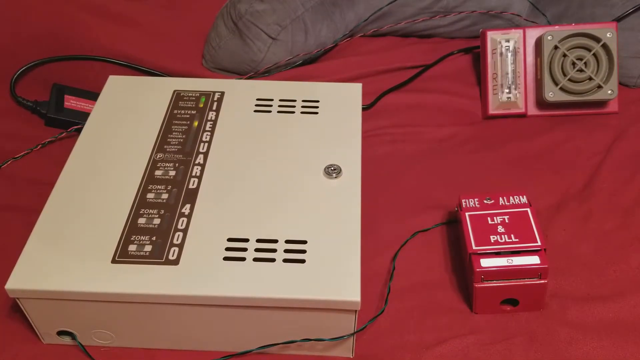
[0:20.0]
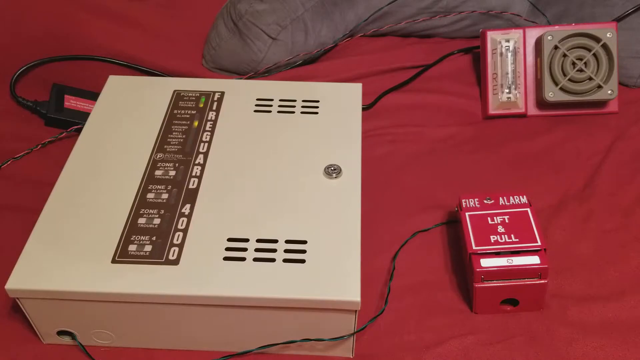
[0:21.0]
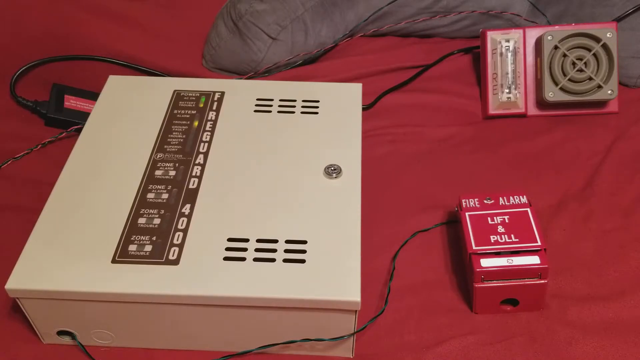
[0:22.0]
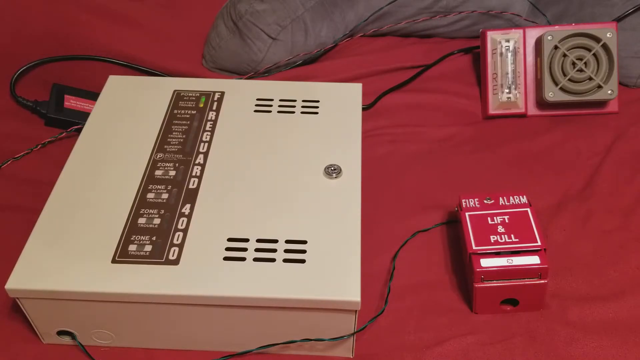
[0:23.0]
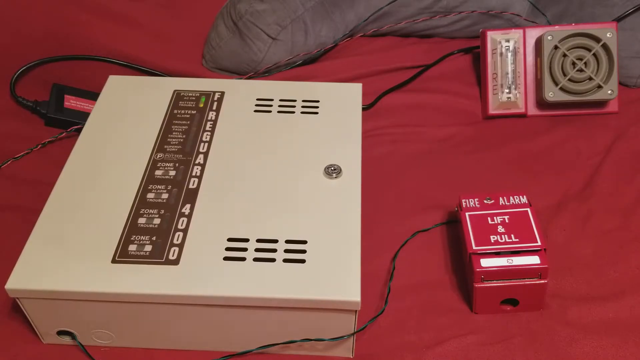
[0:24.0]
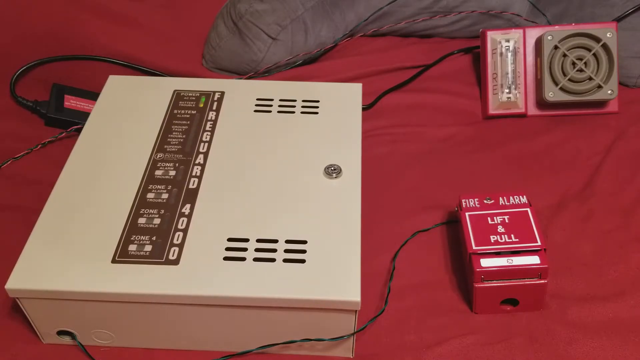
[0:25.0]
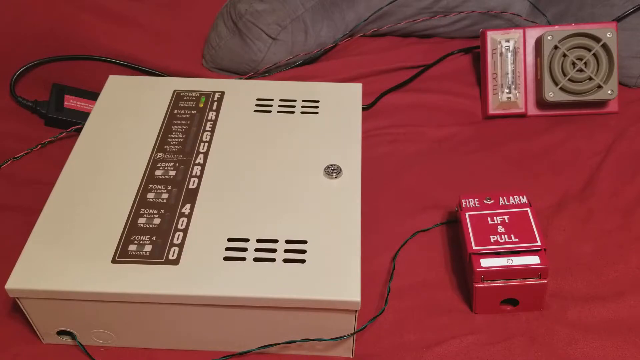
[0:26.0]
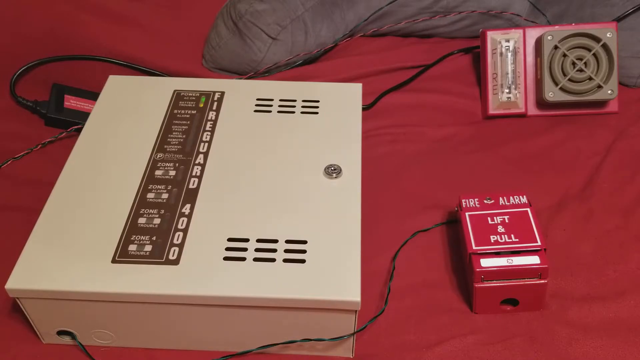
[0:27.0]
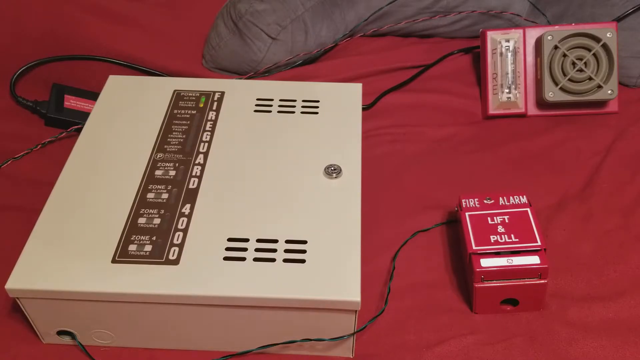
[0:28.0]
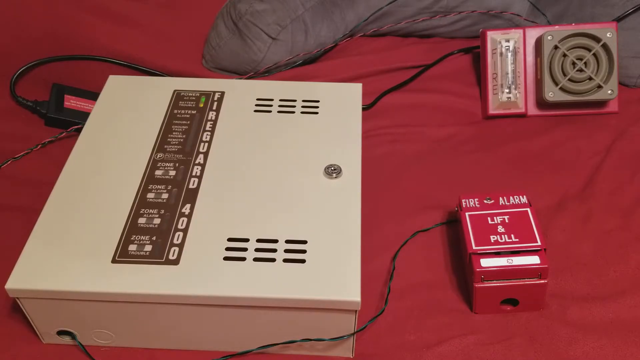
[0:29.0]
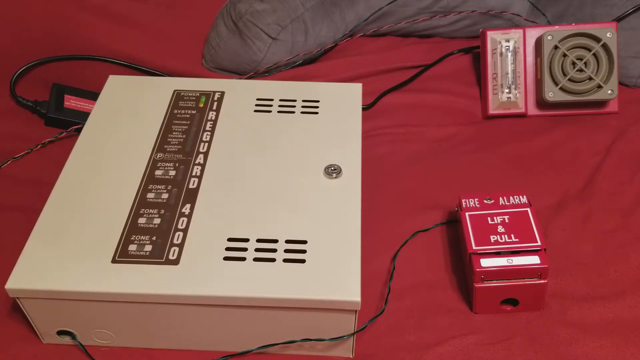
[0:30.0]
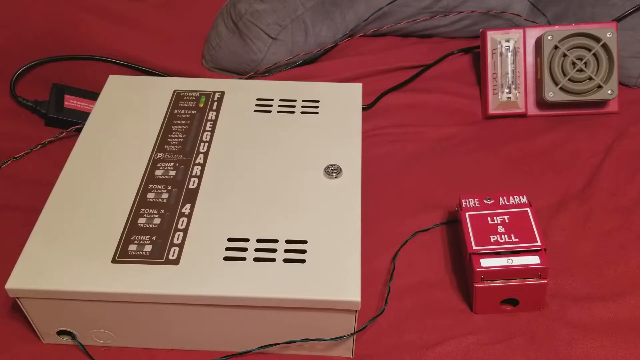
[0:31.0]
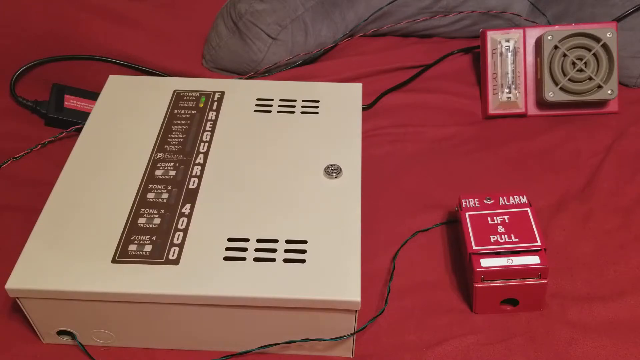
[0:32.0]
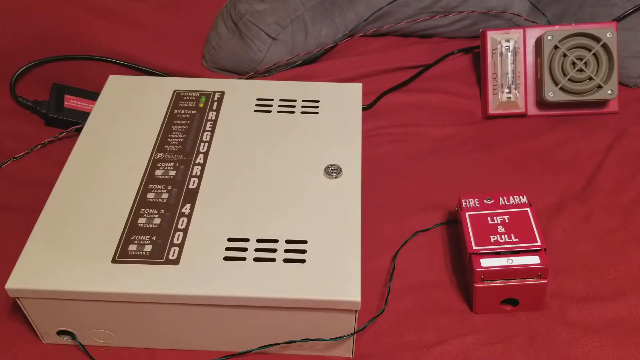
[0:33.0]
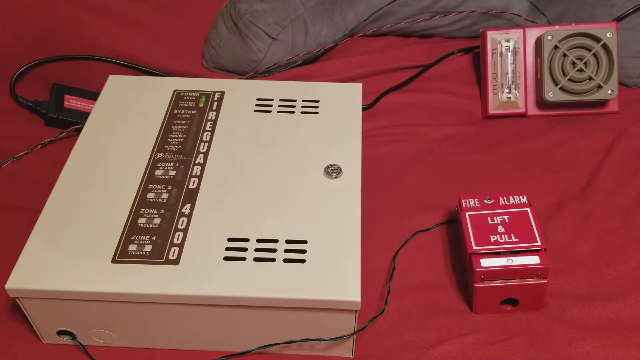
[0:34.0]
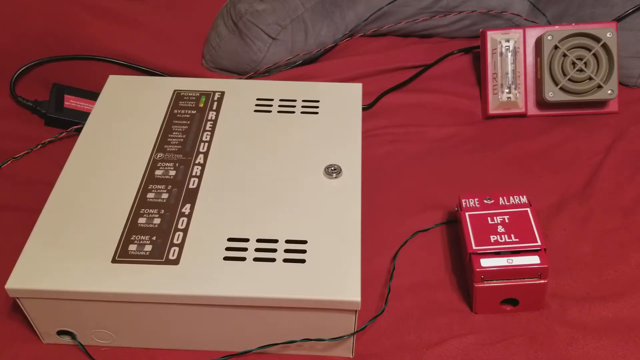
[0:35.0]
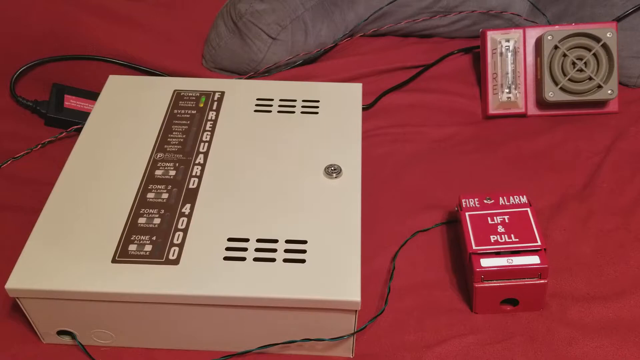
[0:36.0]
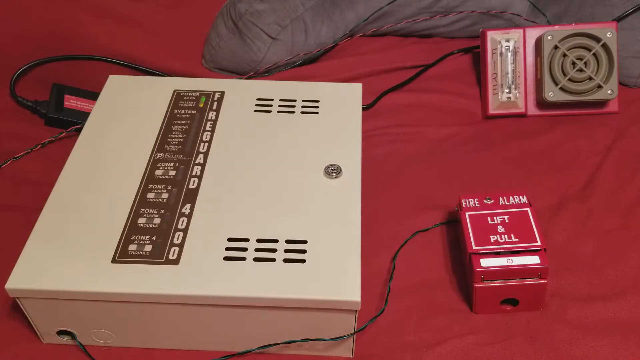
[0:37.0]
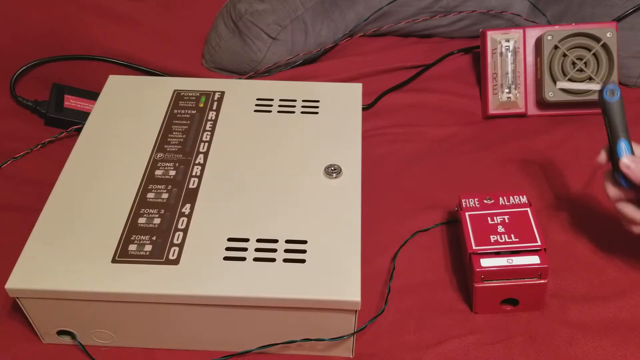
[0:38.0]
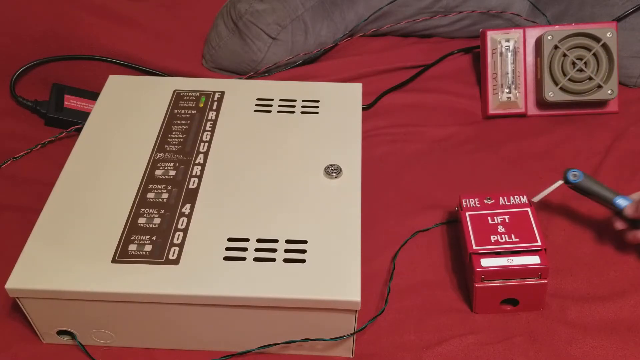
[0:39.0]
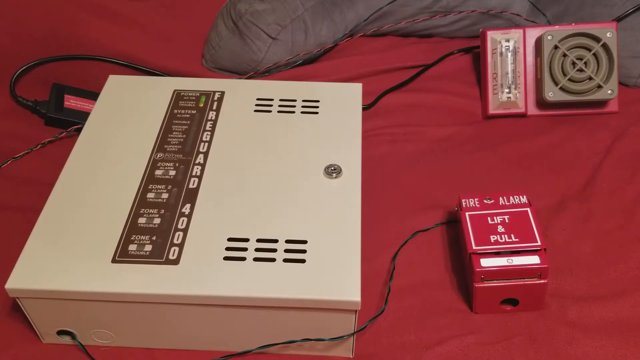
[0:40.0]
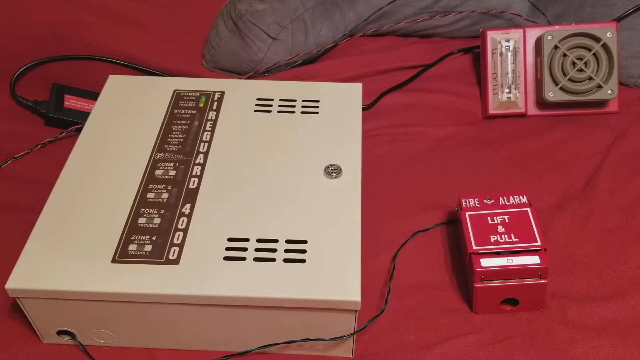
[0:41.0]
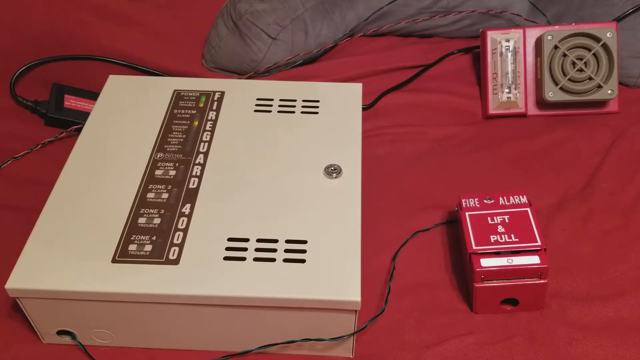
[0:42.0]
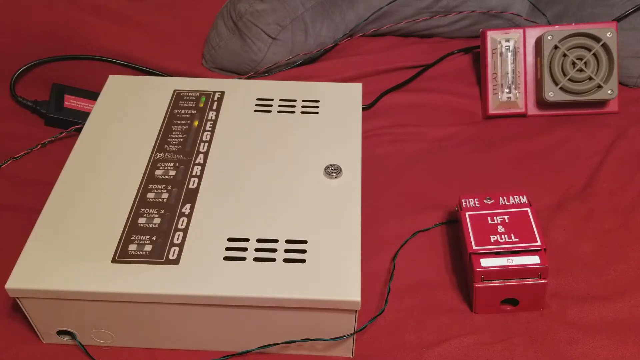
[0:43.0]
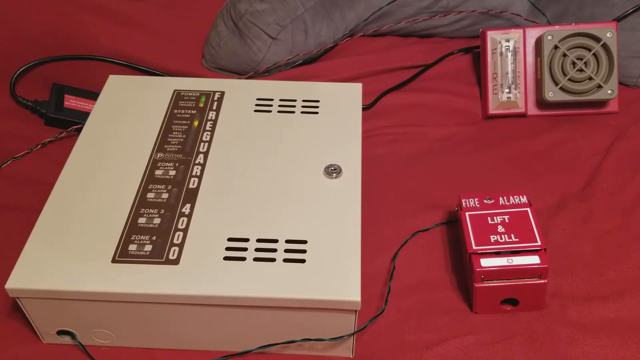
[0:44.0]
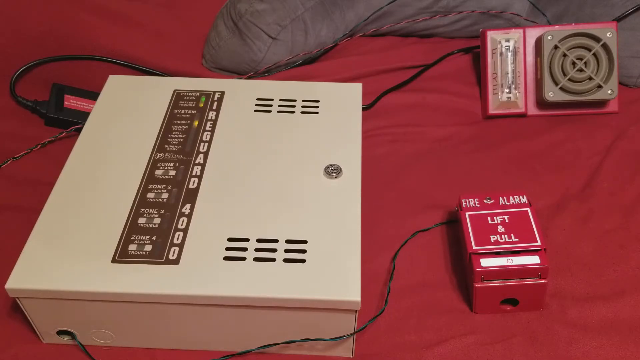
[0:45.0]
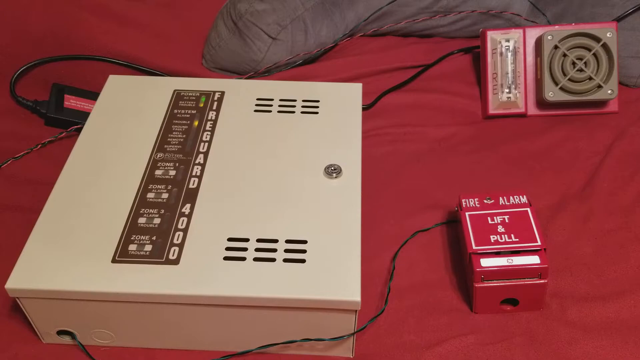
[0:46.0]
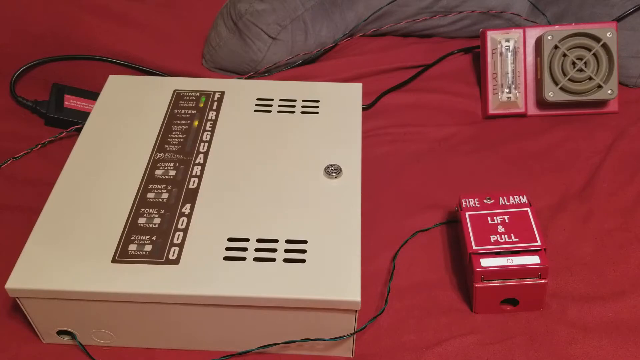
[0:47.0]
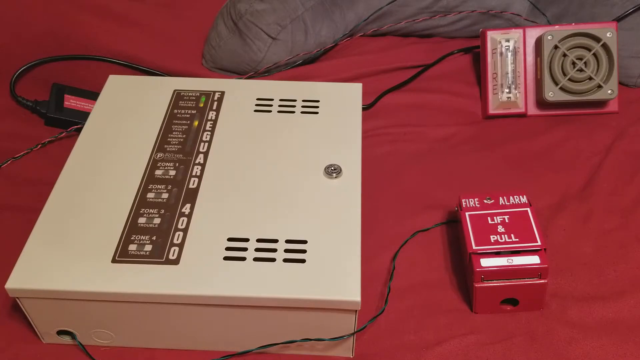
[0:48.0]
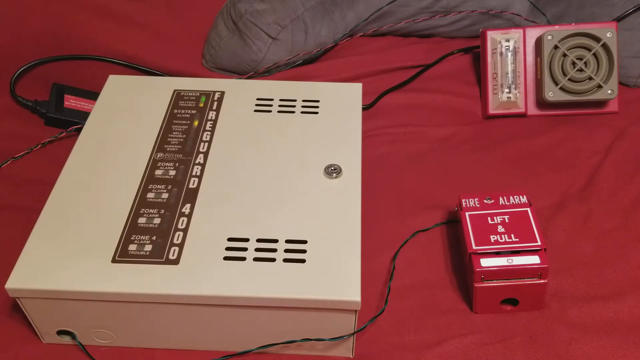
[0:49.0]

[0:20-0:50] With the box shut and the hand out of the frame, the lights on the box are visible. To the left of the vertical "FireGuard 4000" text on the sticker, a yellow light is flashing, and above it a yellow light and a green light are next to each other vertically, constantly on rather than flashing. Otherwise nothing happens. A hand briefly enters the frame holding a tool of some sort, apparently a multi-tool, as if to show it to the camera, and quickly leaves. The sticker has a section labeled "Power," under which the green and yellow lights are, perhaps showing that the system is on. Beneath that is a section labeled "System," where one yellow light is flashing, with space for multiple other lights that are not on.